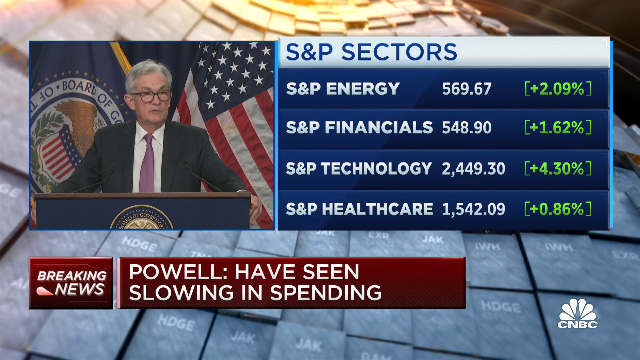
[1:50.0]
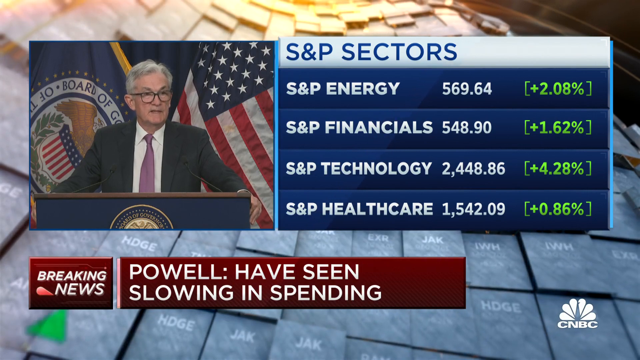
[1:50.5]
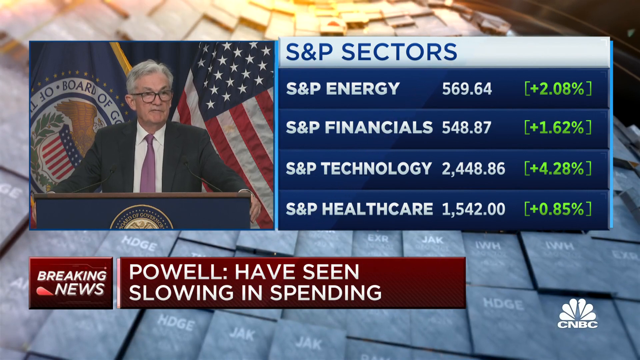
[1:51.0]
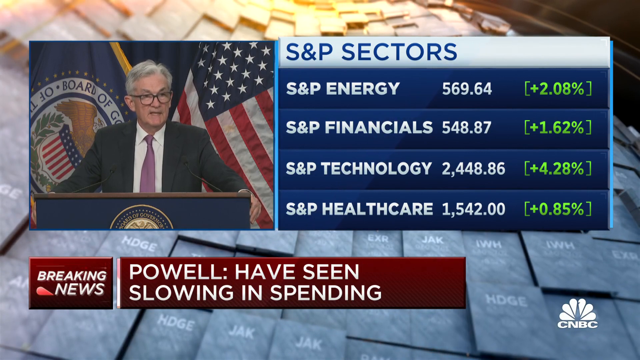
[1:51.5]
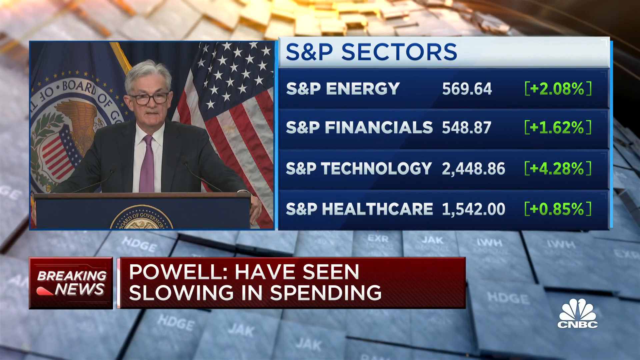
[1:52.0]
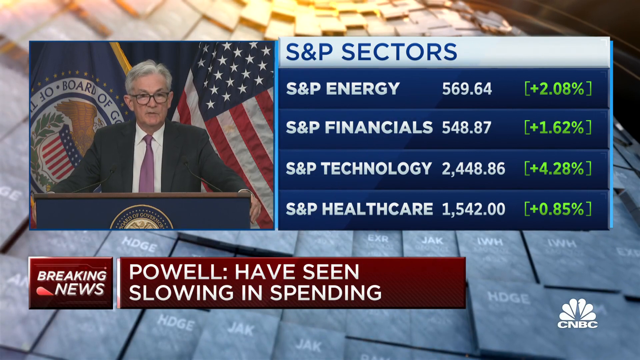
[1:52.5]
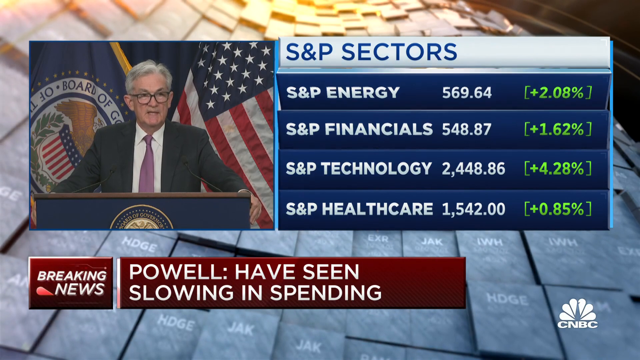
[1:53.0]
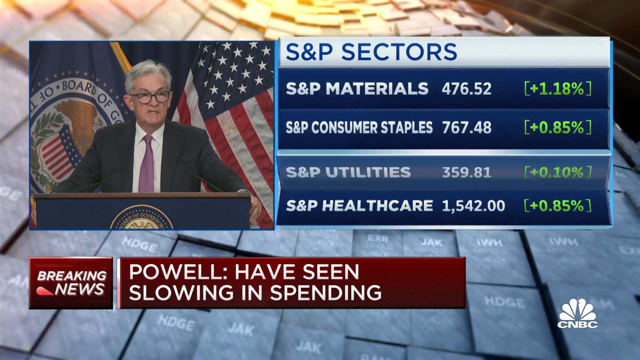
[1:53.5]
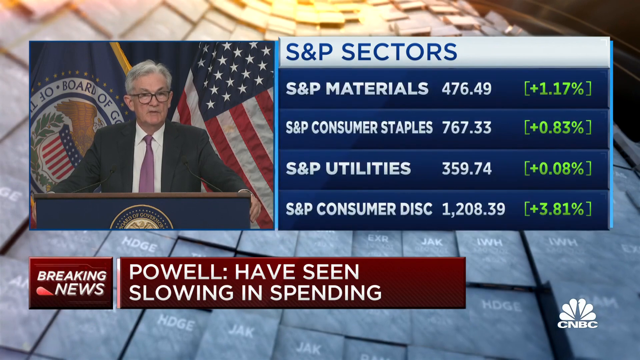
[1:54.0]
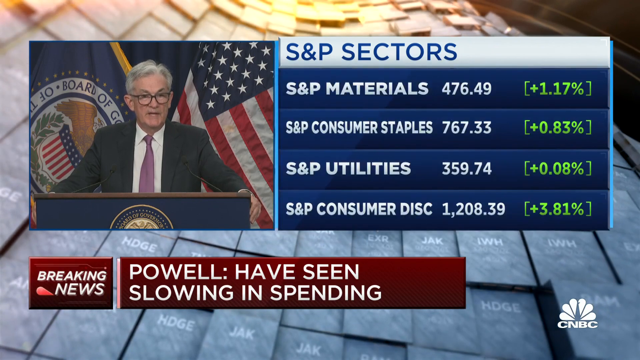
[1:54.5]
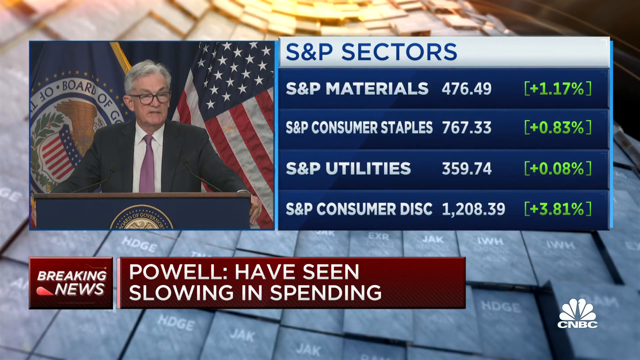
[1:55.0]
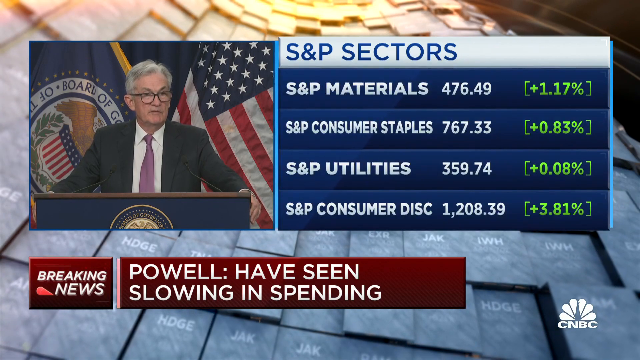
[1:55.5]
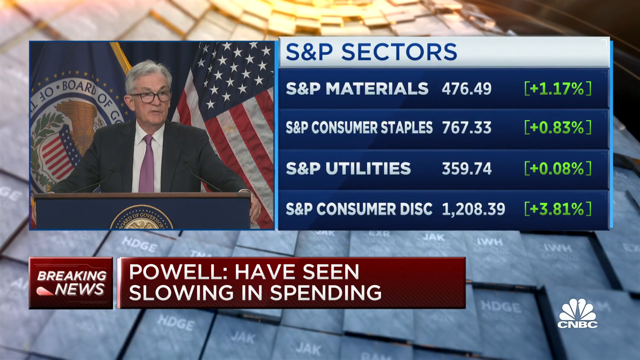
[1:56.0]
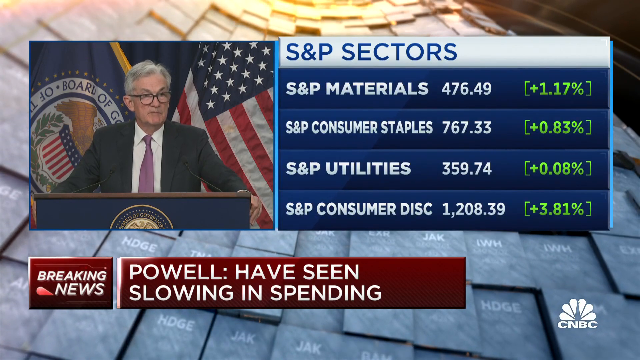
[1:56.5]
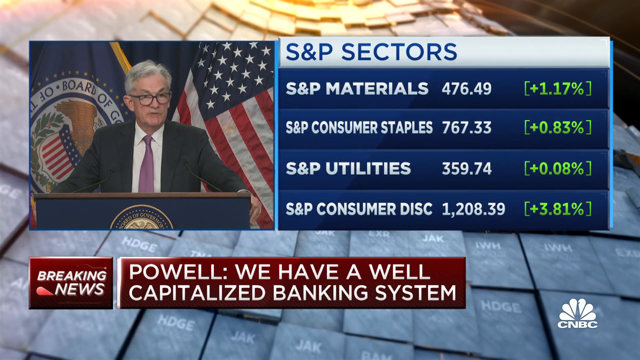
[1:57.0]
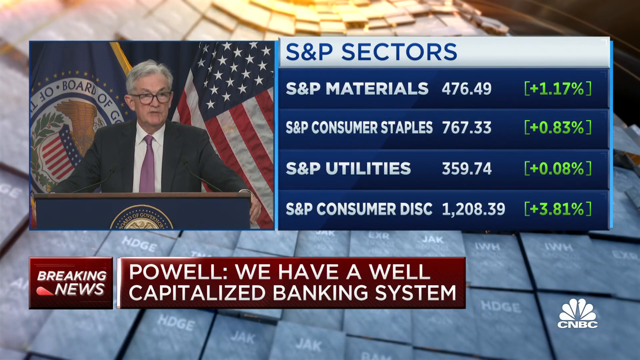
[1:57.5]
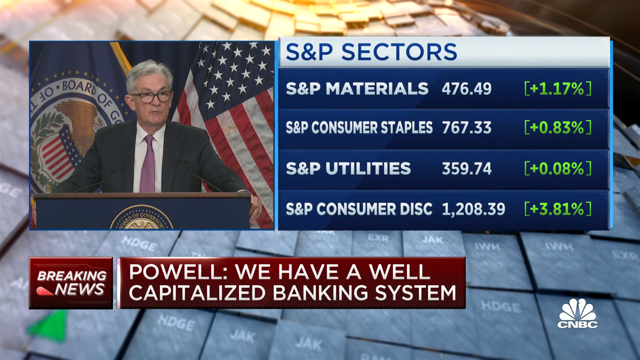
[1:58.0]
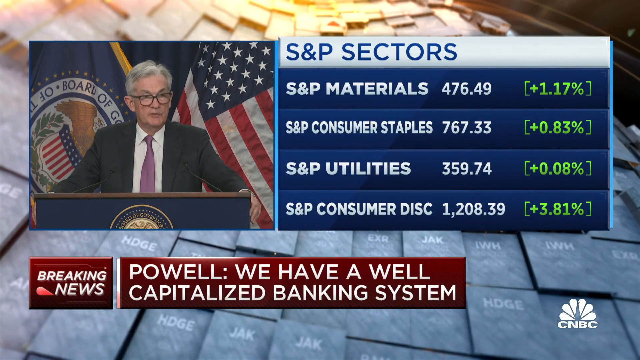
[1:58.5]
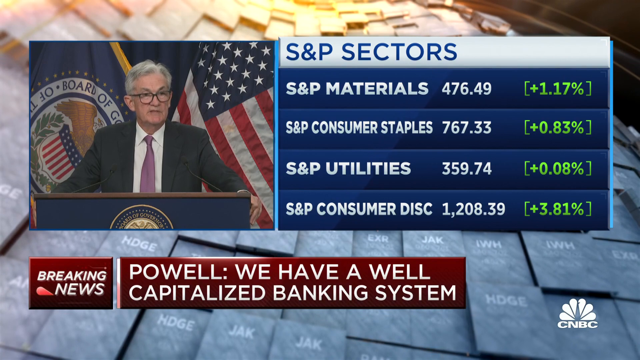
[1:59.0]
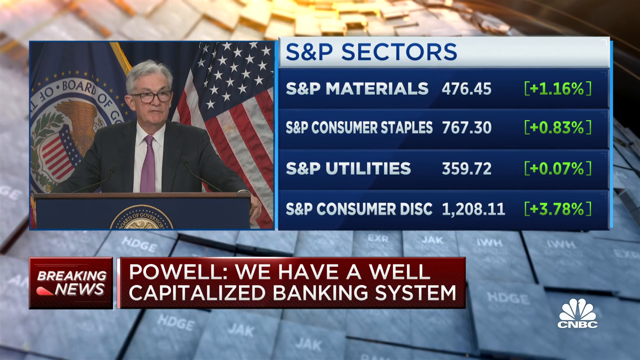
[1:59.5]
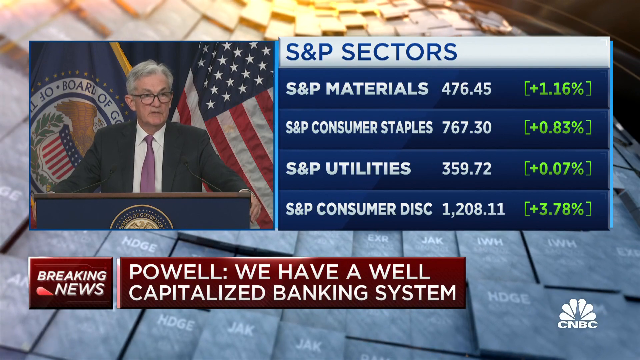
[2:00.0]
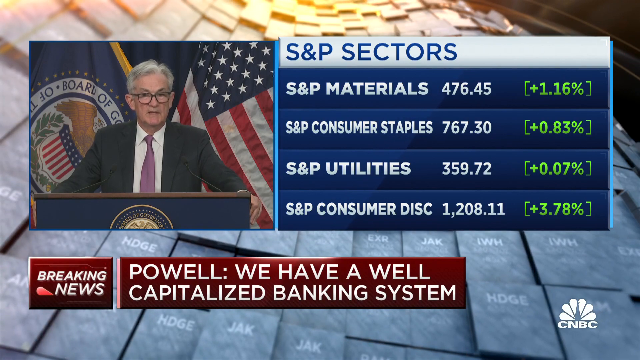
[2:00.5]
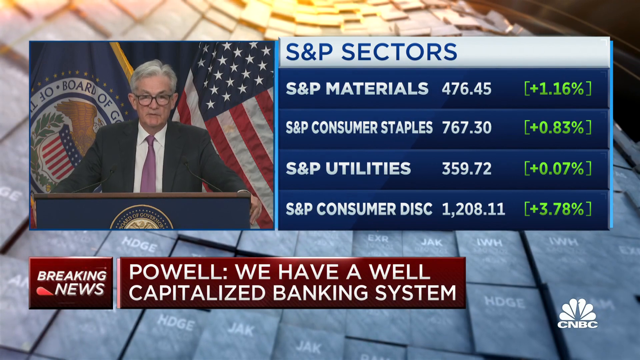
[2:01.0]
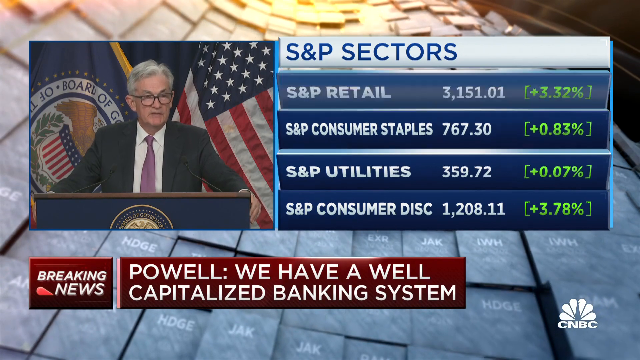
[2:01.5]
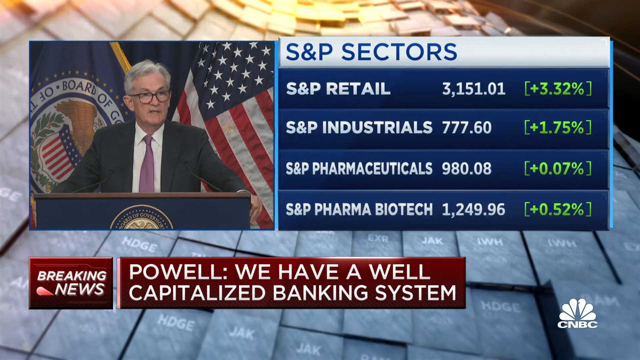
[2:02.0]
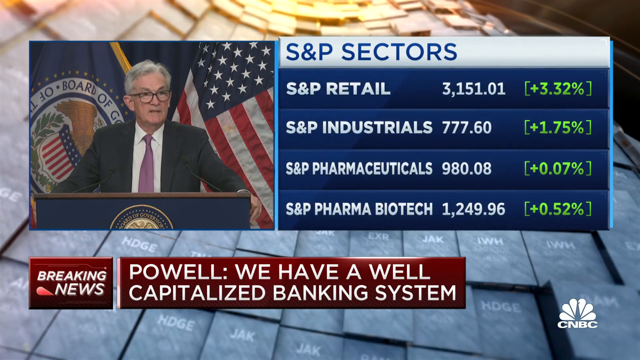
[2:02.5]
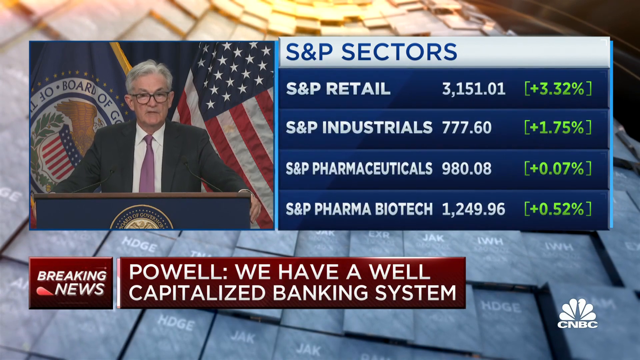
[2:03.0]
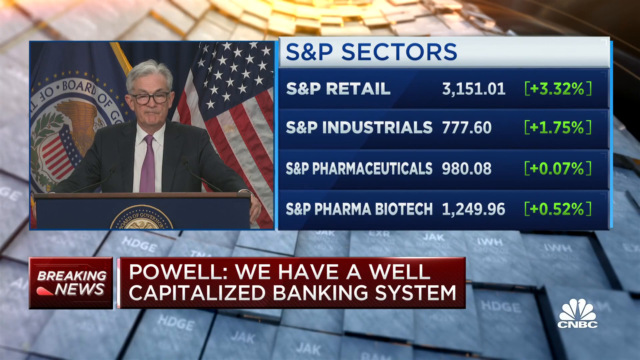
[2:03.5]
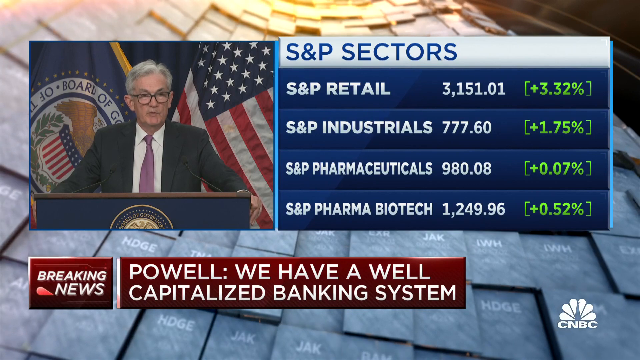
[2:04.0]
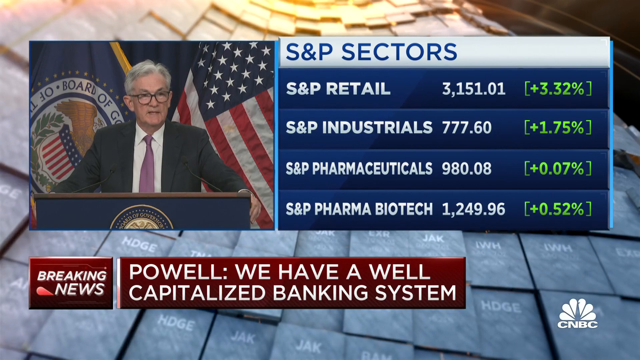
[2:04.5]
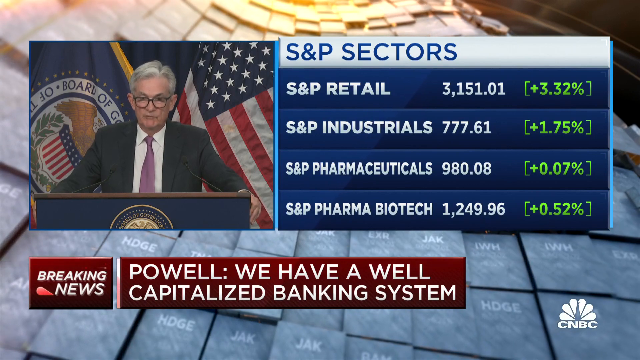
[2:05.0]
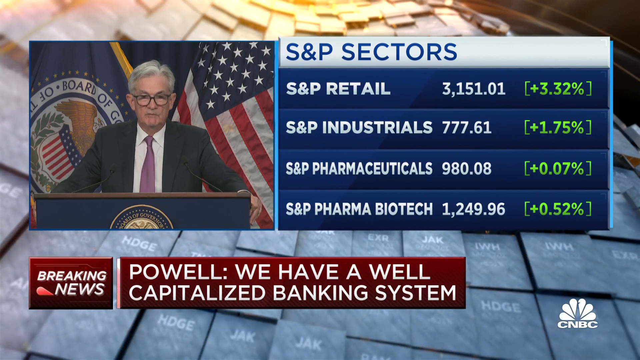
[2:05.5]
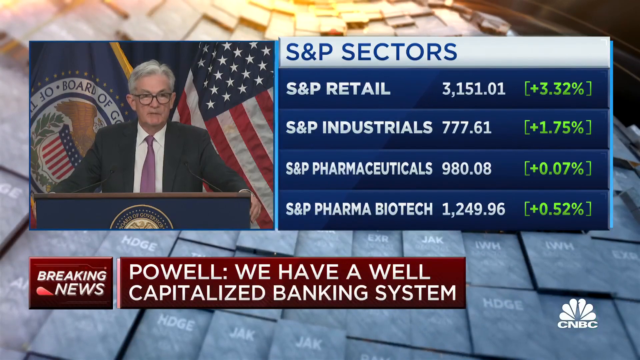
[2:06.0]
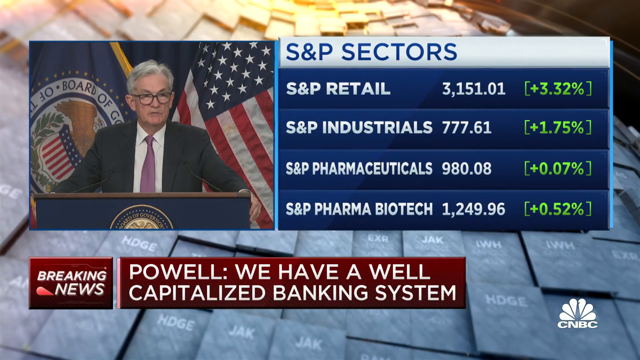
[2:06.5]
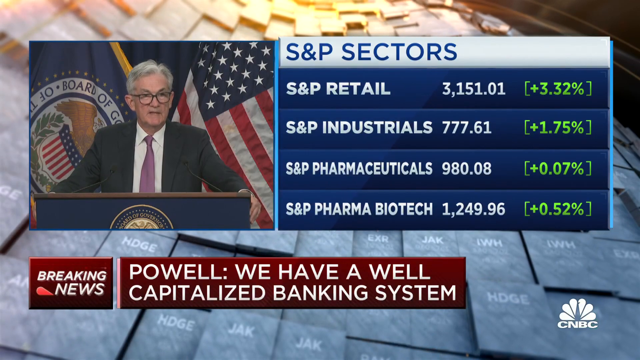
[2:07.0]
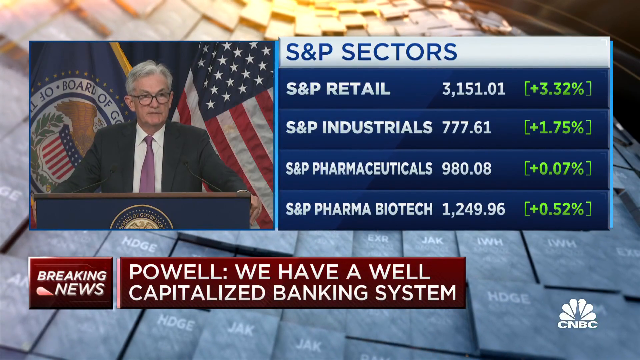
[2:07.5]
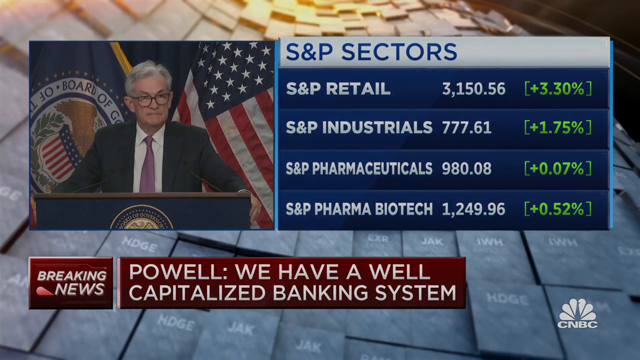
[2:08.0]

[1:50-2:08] The markets are shown bouncing back. Powell says there is a well-capitalized banking system. In the CNBC breaking news segment, Powell speaks to the staff.